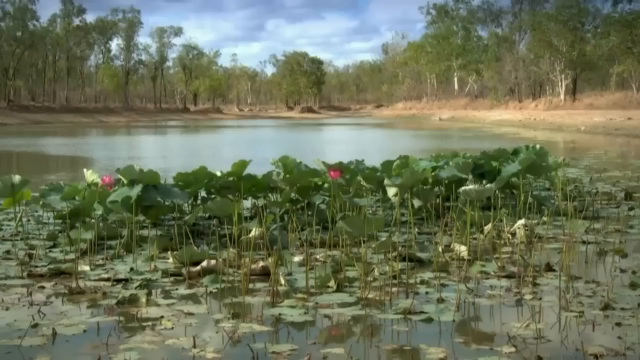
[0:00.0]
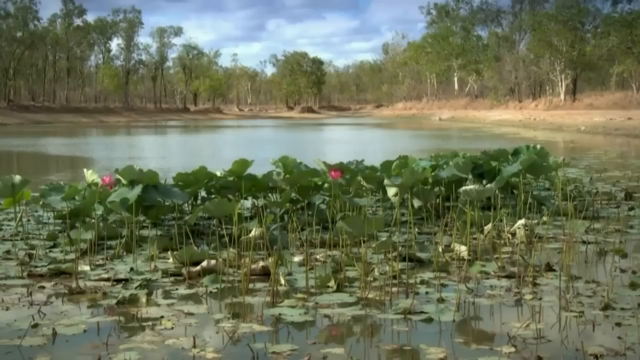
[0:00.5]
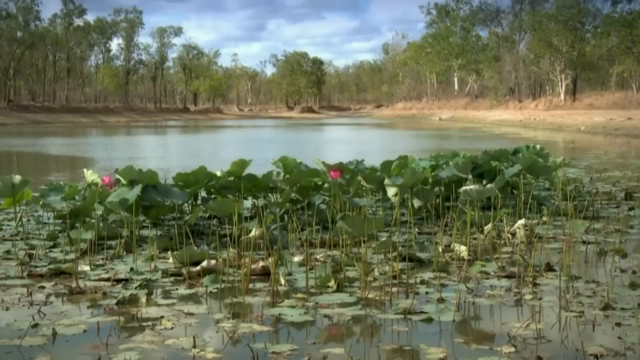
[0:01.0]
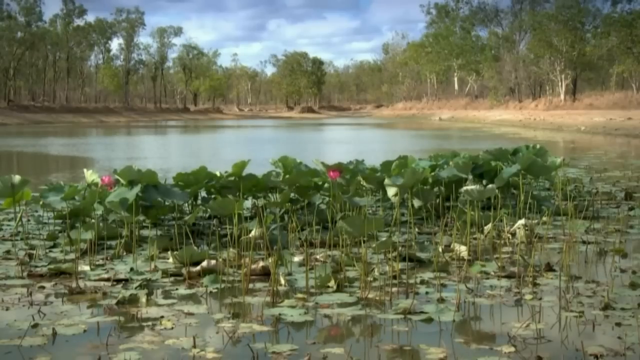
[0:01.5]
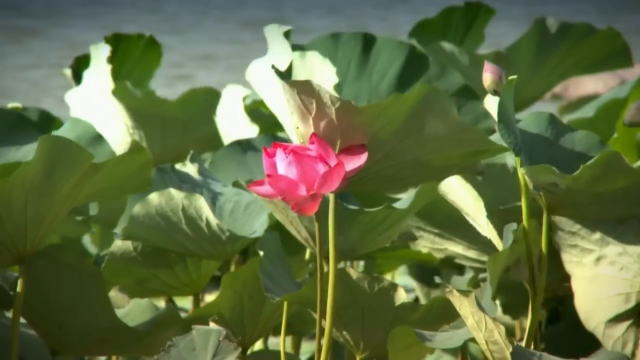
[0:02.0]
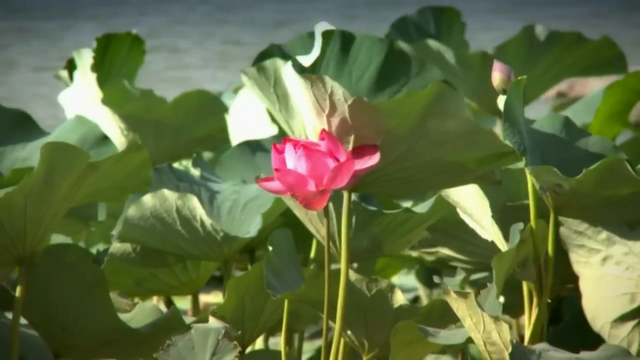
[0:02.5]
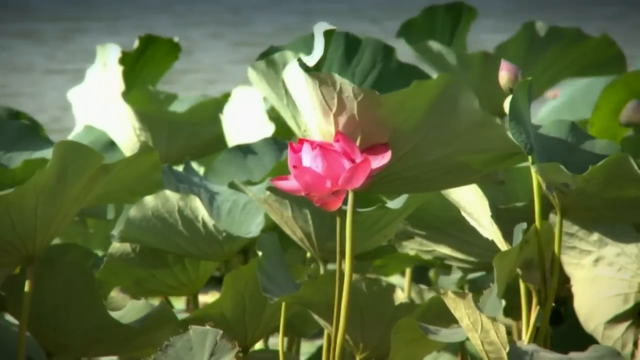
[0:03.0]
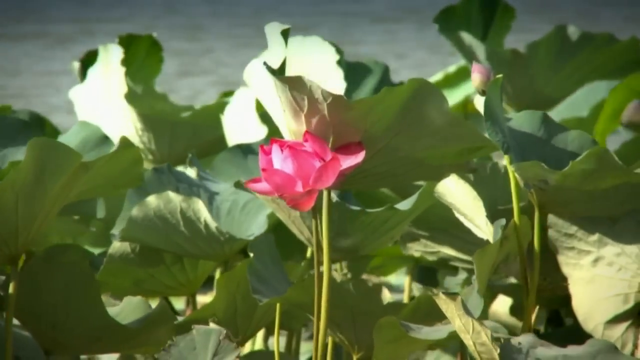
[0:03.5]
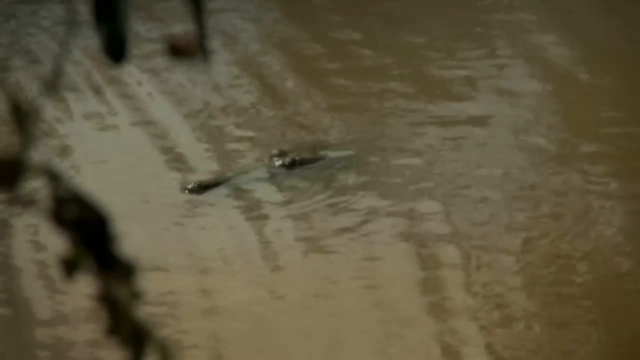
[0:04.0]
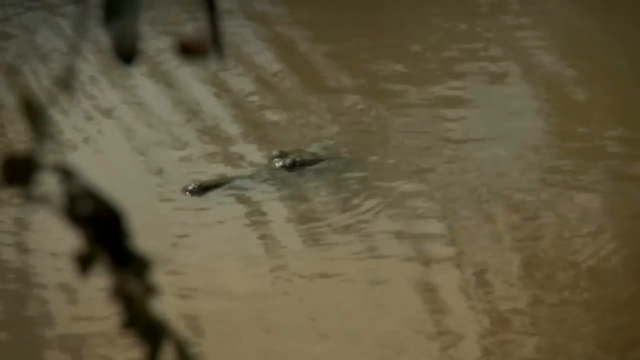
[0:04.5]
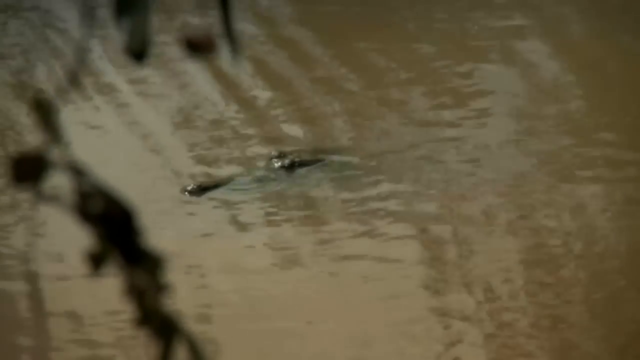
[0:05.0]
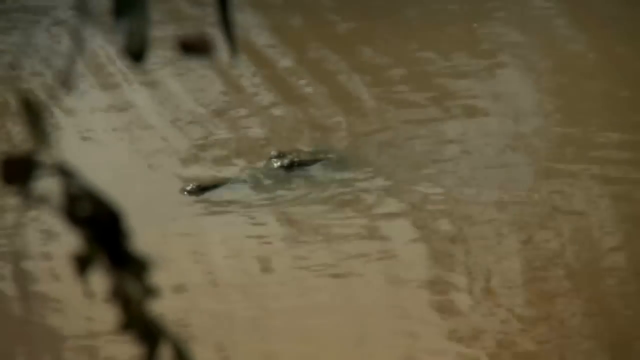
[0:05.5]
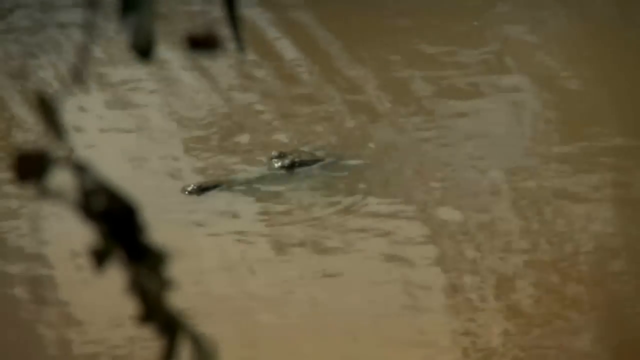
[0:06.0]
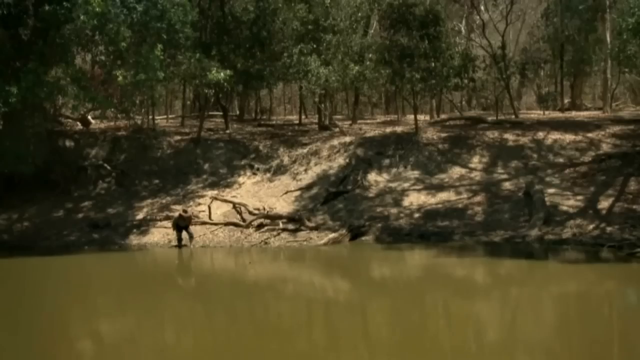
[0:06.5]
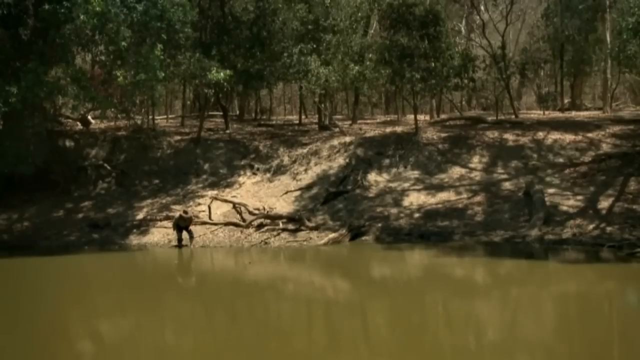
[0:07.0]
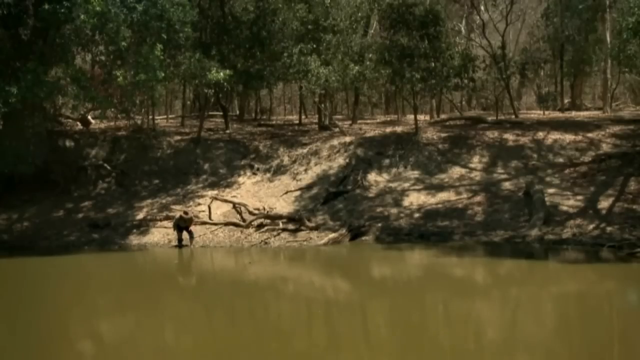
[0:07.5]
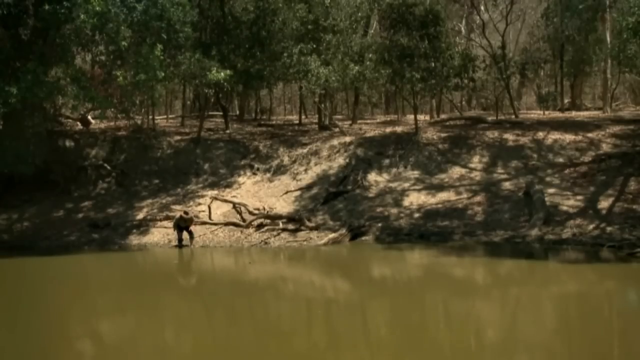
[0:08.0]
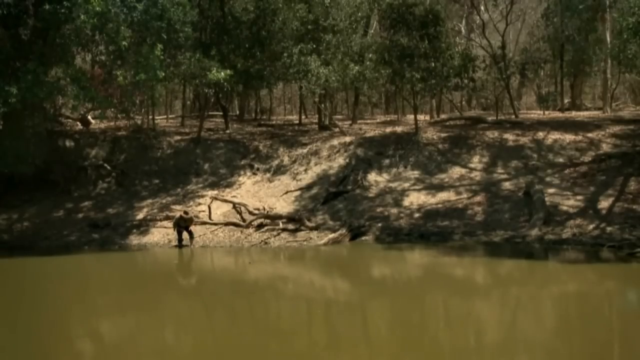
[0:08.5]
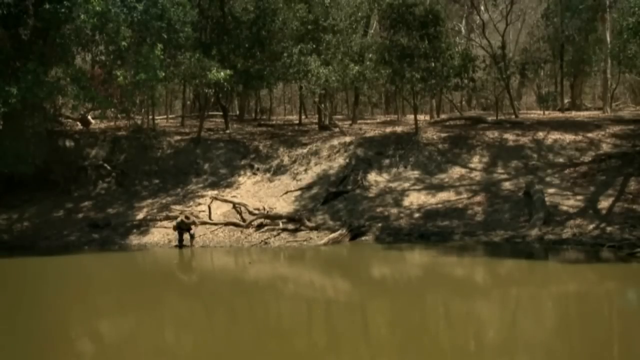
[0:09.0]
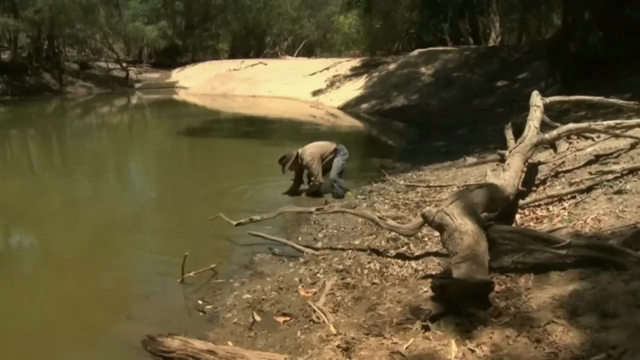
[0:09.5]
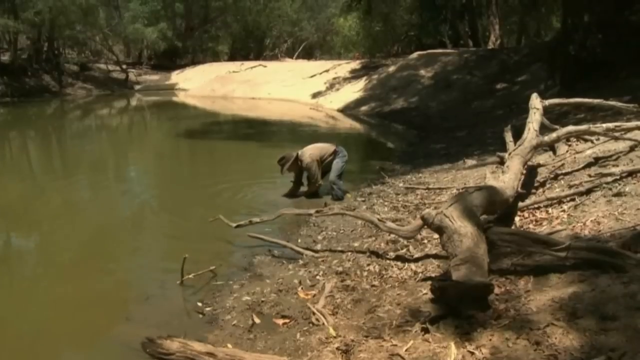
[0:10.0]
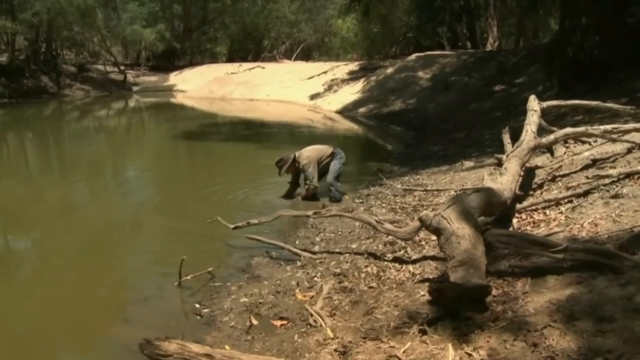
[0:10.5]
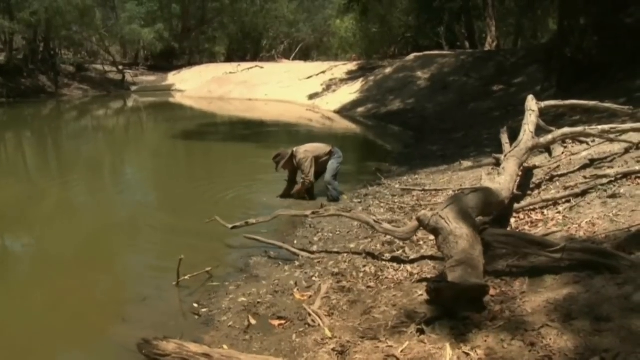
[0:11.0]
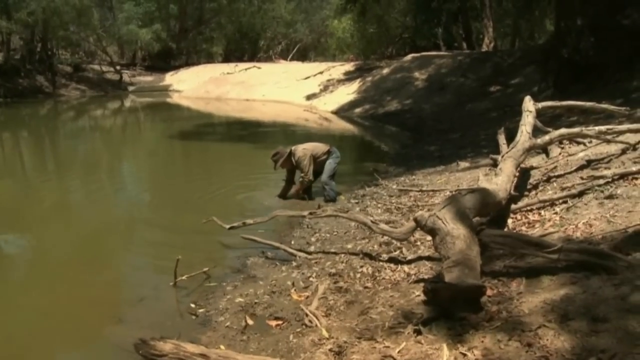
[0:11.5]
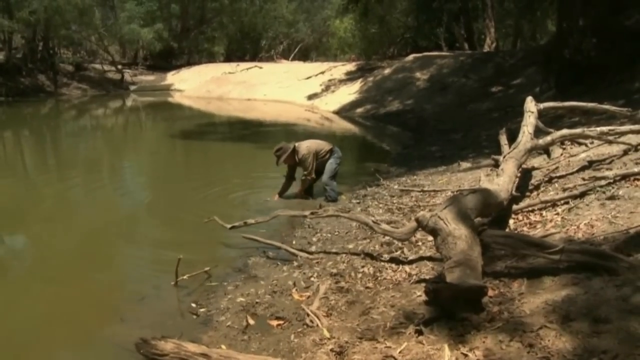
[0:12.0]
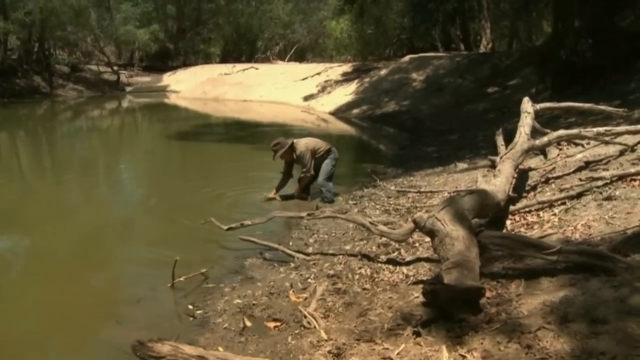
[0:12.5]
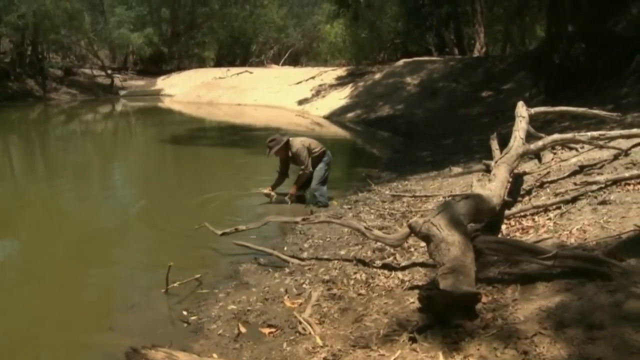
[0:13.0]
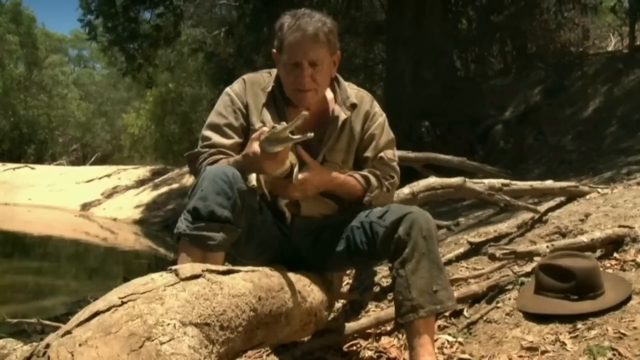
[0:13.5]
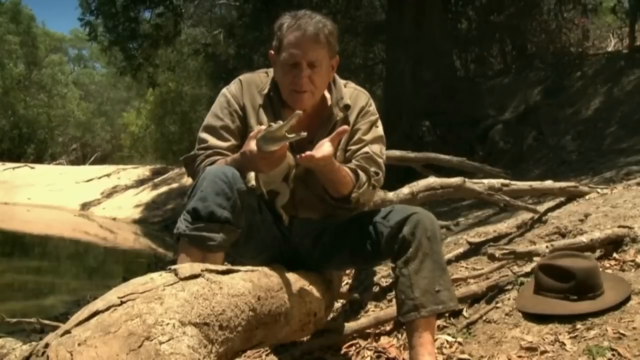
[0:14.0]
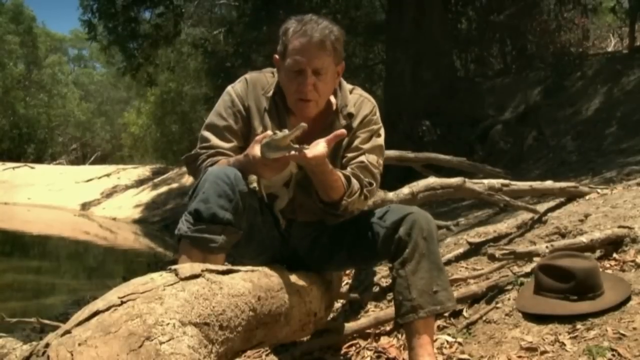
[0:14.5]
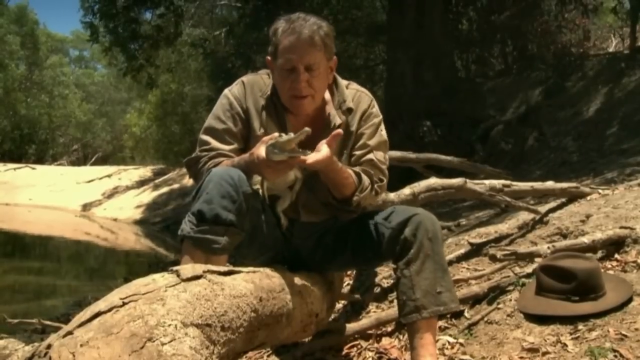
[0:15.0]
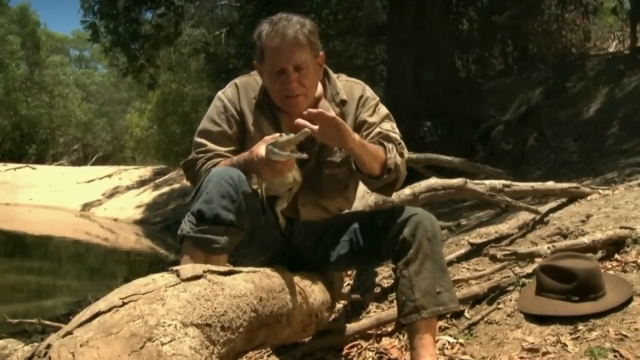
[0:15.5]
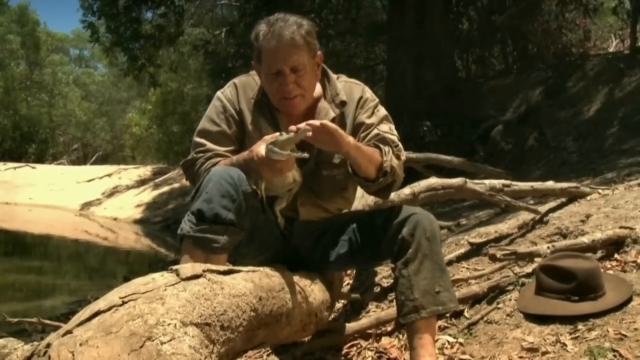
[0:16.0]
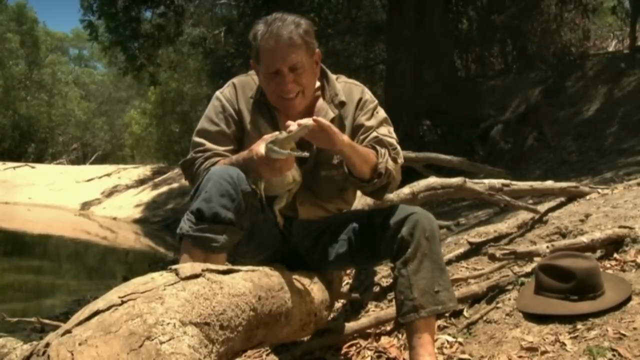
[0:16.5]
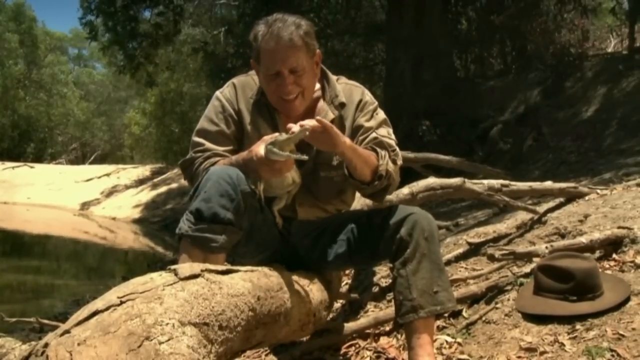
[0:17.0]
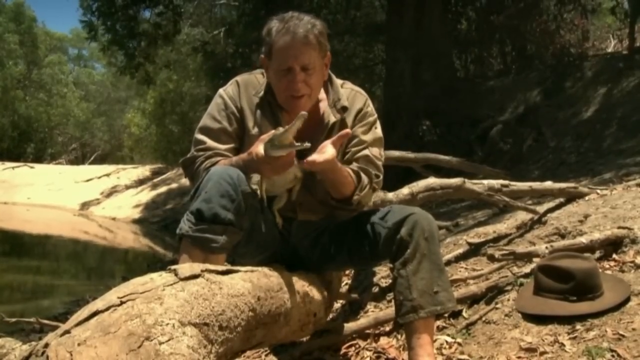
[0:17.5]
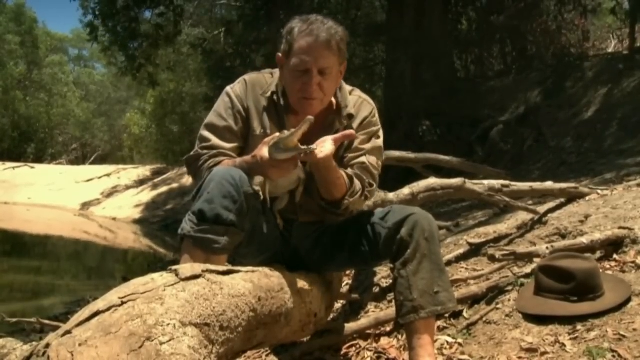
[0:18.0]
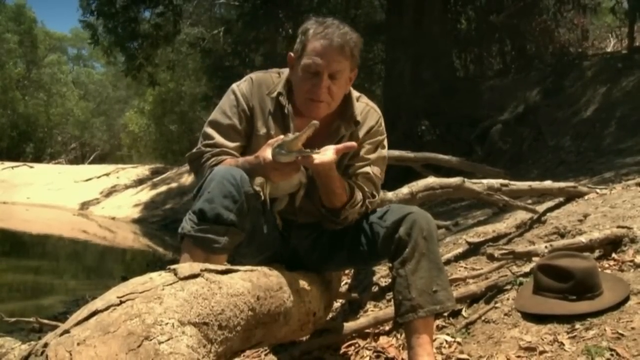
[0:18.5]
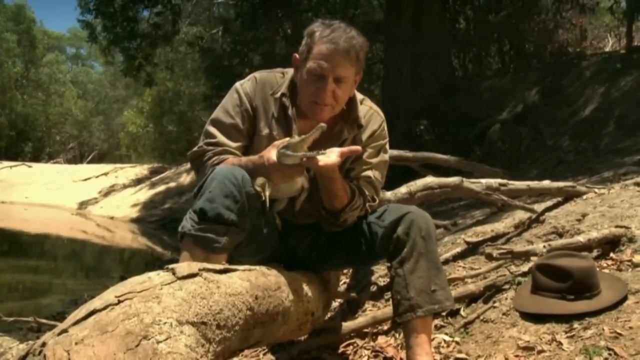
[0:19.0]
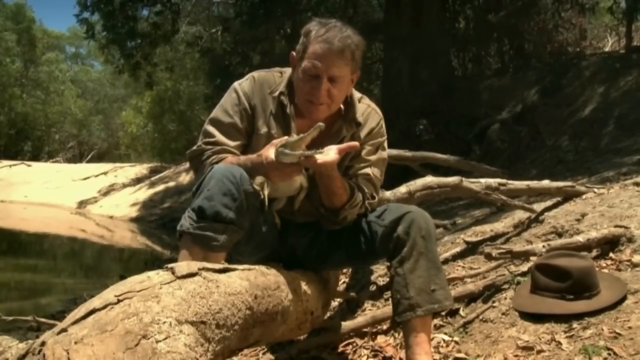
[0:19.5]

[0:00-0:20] Shrubs grow on top of rivers, ponds and lakes where the water is mostly stagnant. The video zooms in on the shrubs, showing the flowers that bloom from these plants; the flowers are pink and the plants are green. The focus then switches to what seems to be the head of a crocodile, with the rest of its body submerged in brown water; the crocodile seems a bit tiny. Next, a man is on the riverbank, or the bank of a dam. He seems to be grabbing something in the water, with water splashing, and seems to grab it with two hands and drag it out of the water. The scene switches to him sitting down with a little crocodile in his hands, apparently what he pulled out of the water. He is sitting on top of a dead brown tree stem and seems to be brushing the head and nose of the small crocodile. The video then zooms into the crocodile's mouth, showing all its teeth as it has its mouth open.